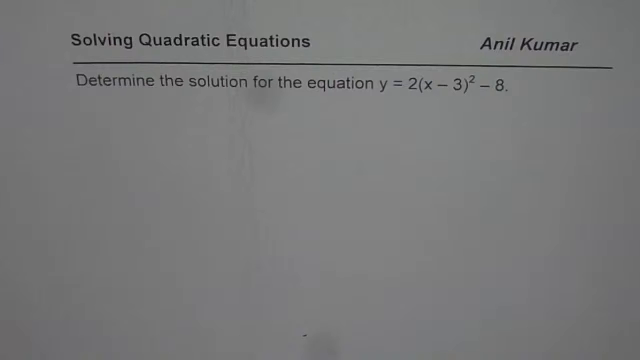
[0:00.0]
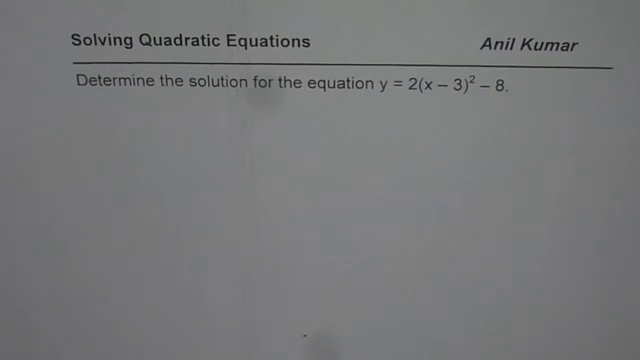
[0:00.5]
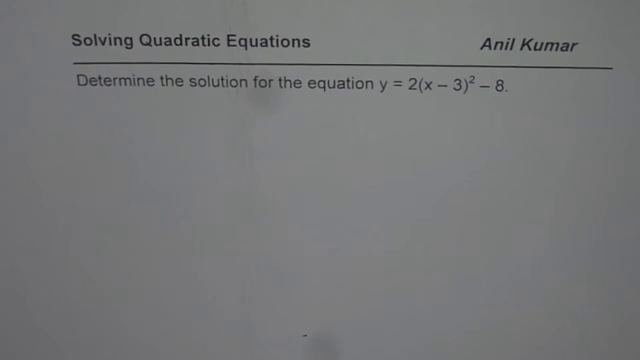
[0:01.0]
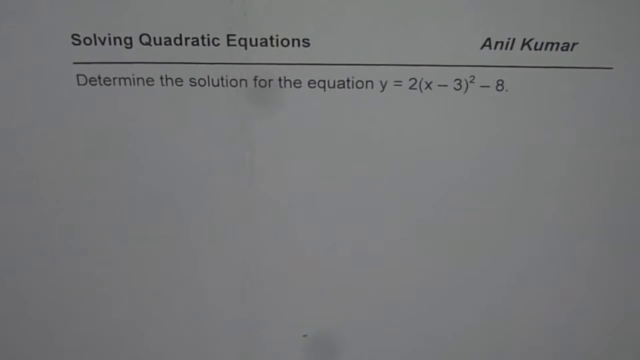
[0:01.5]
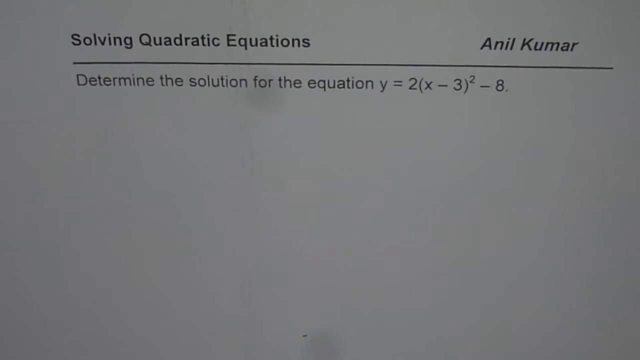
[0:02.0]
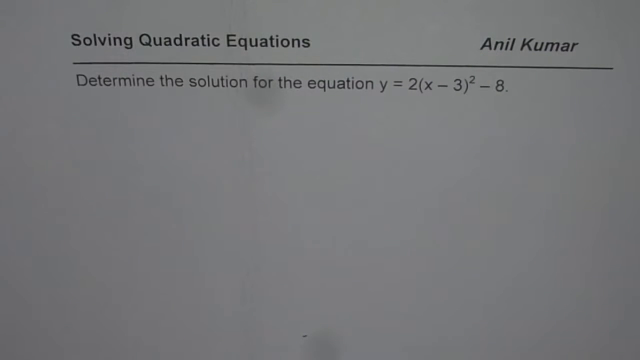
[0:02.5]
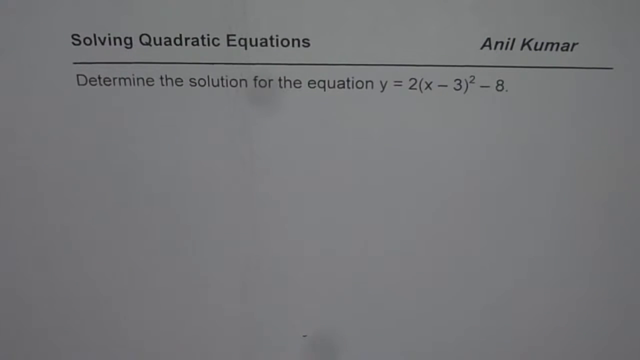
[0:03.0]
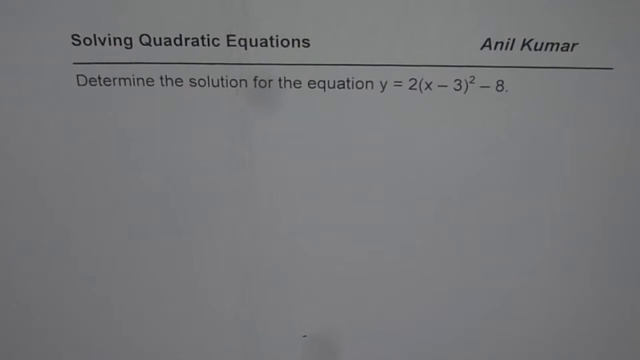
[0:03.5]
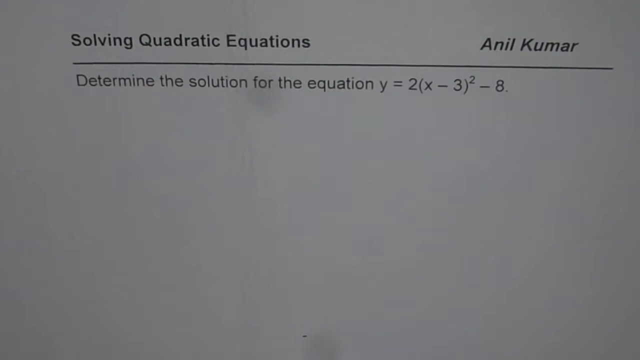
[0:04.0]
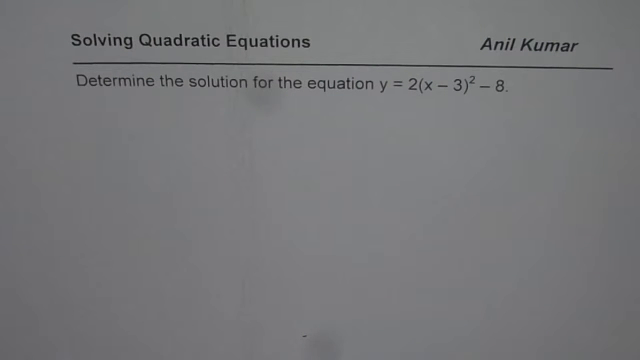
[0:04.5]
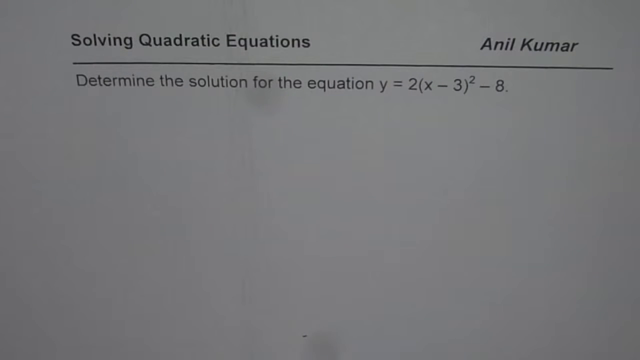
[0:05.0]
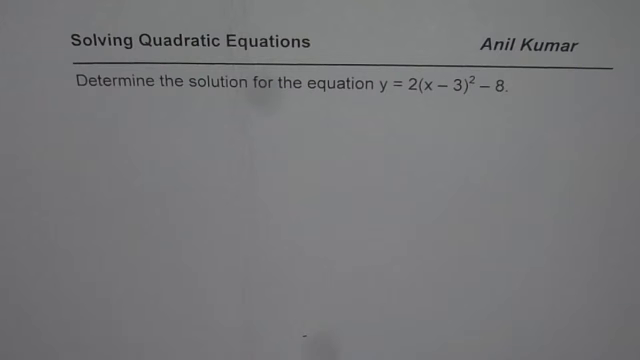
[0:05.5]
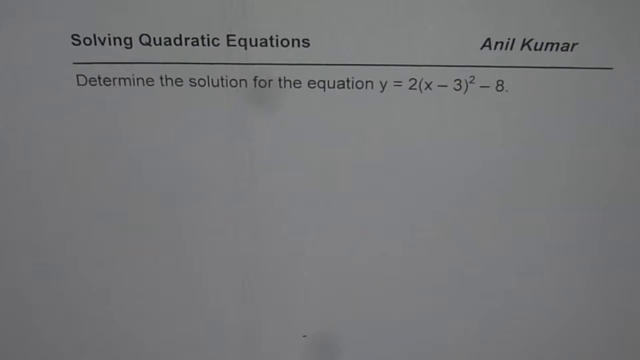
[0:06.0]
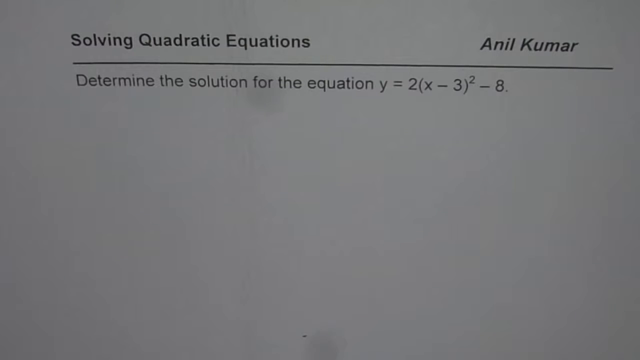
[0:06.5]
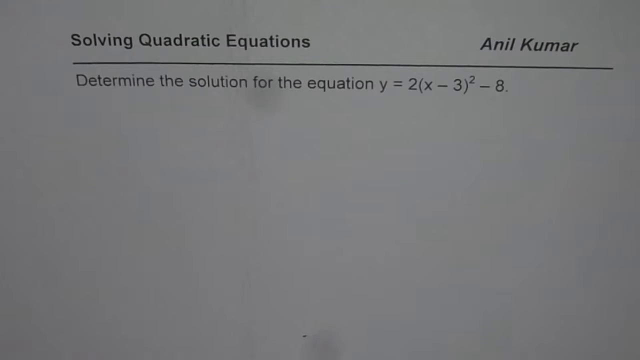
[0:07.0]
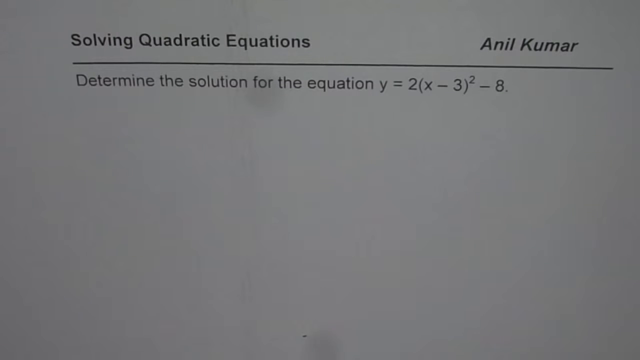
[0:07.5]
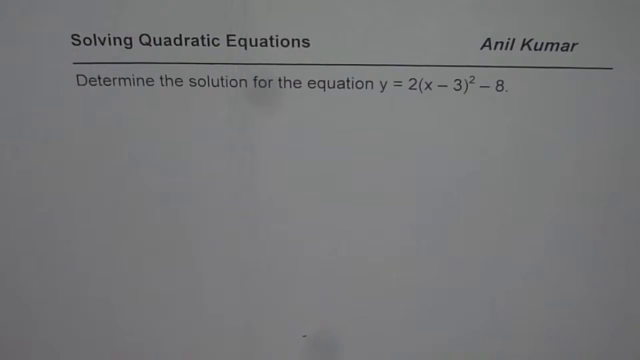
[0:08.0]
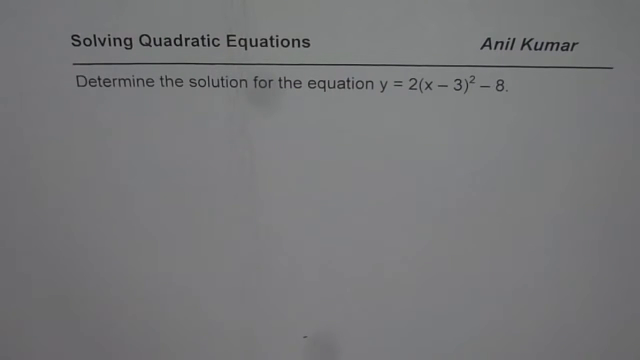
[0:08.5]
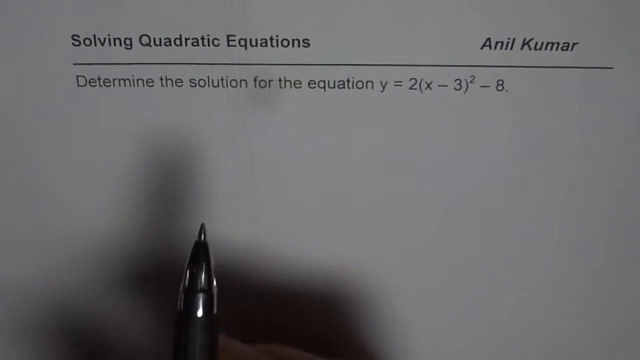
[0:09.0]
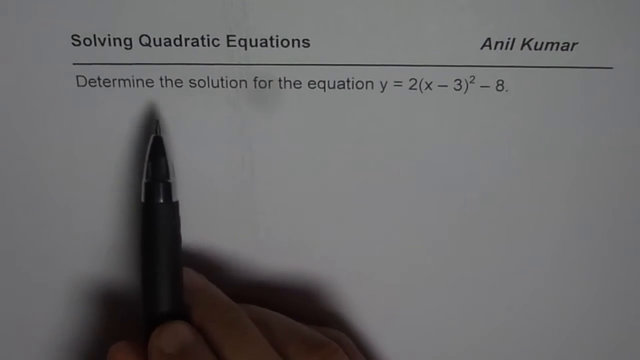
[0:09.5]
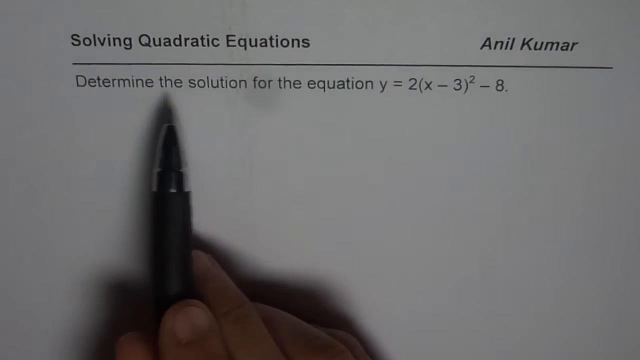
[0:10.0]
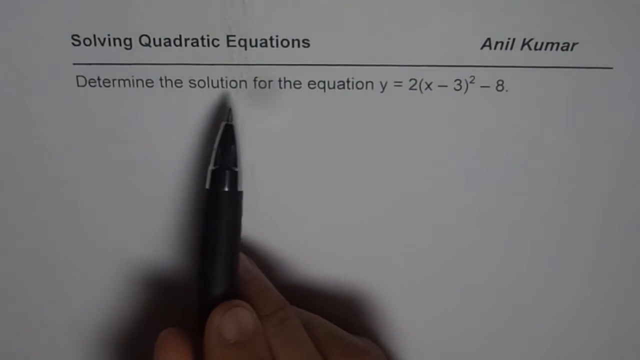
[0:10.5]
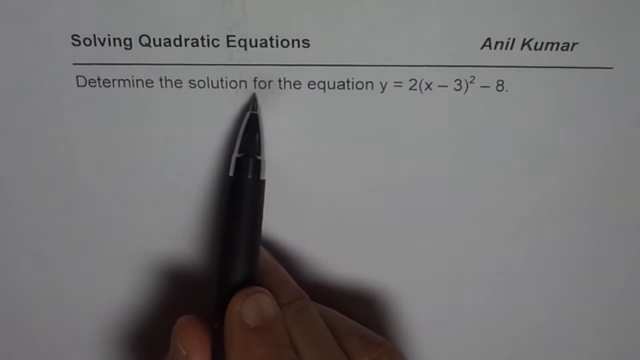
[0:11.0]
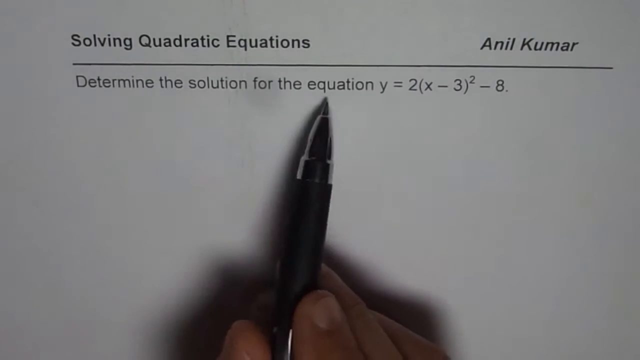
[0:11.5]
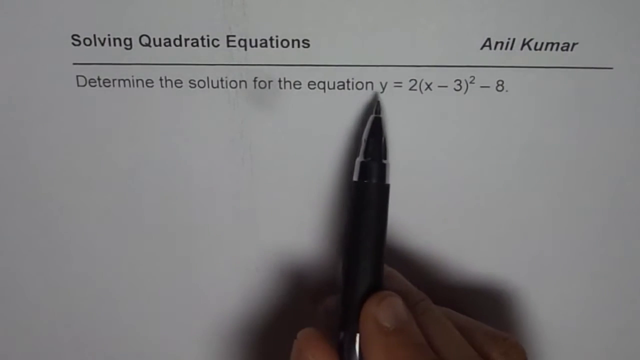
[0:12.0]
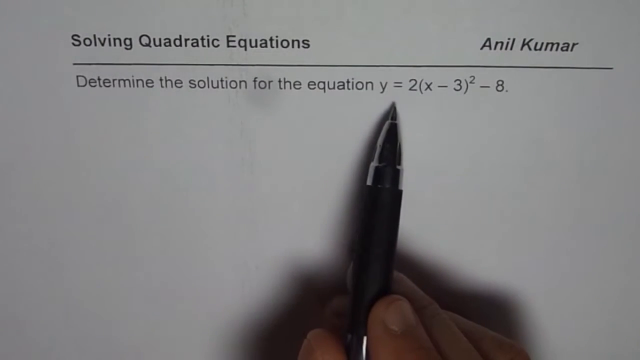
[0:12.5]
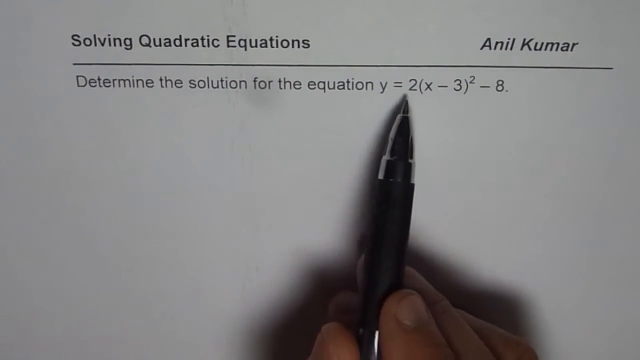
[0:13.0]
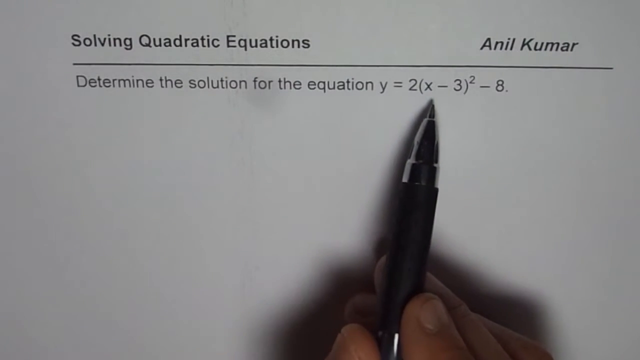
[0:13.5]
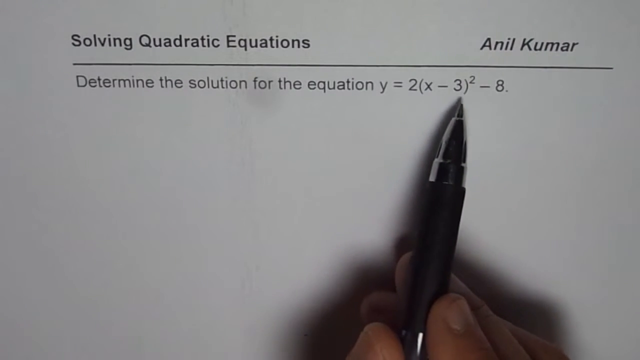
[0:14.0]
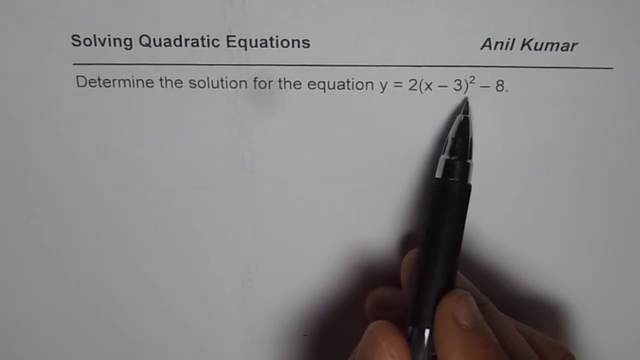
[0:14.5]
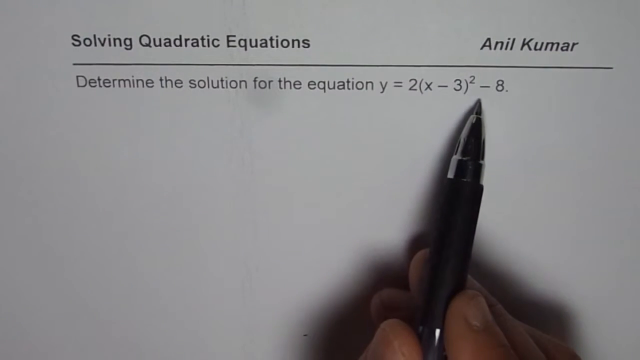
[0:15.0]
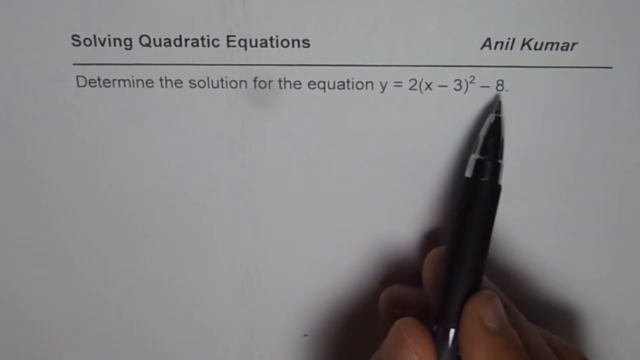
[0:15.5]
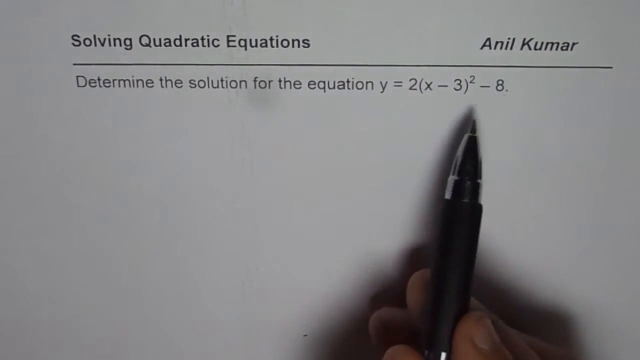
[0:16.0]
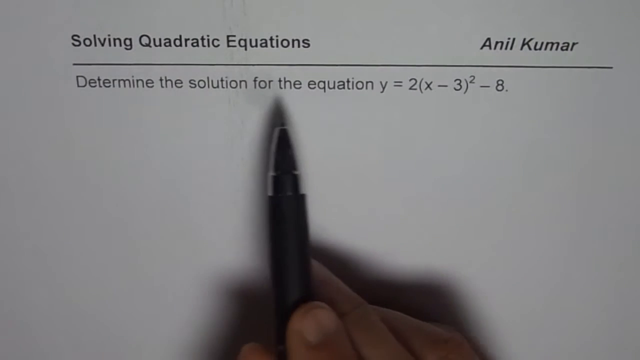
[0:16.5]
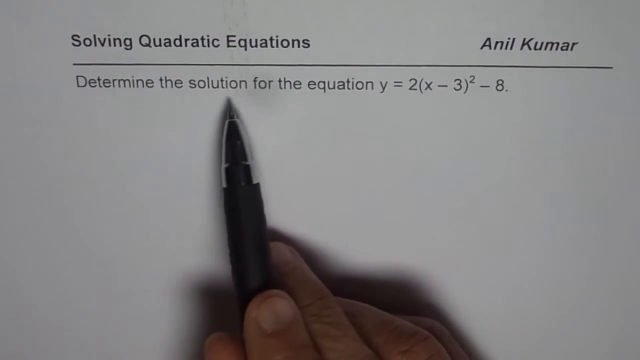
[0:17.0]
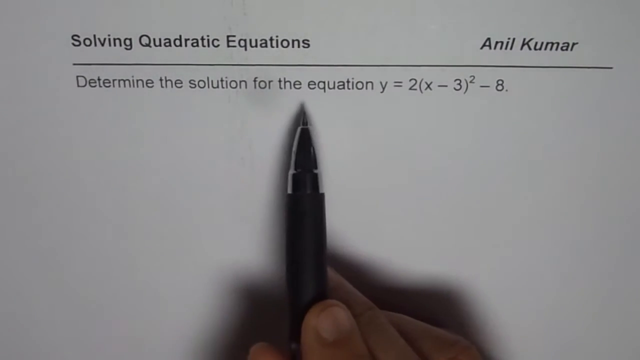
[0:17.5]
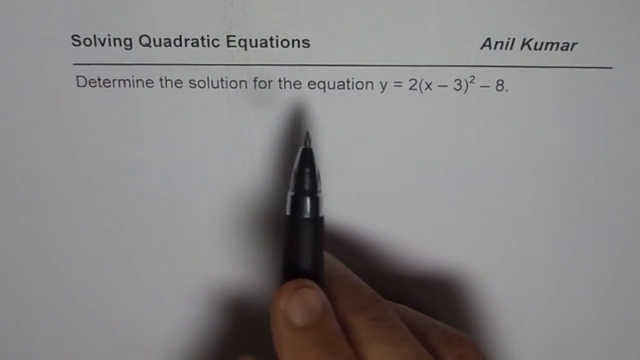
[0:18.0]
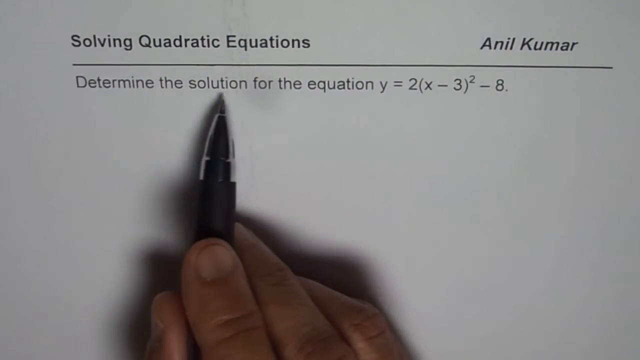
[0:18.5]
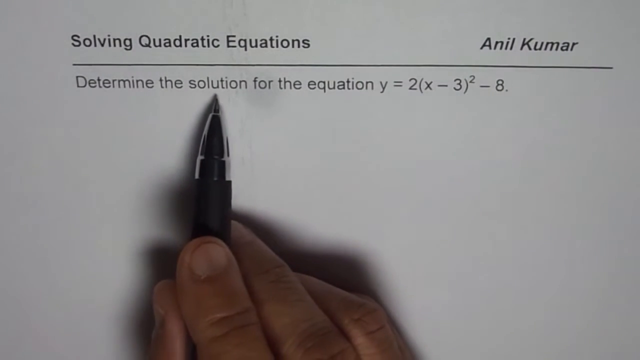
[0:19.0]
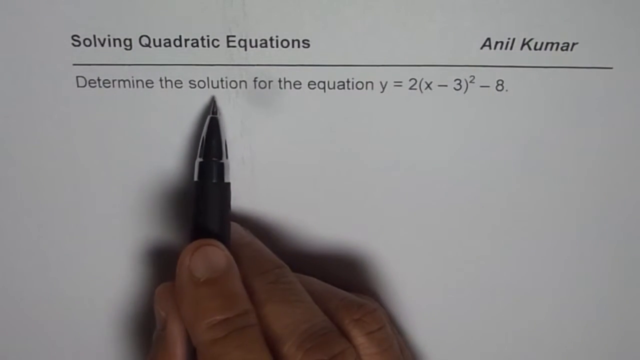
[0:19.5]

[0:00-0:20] A sheet of paper is headed "solving quadratic equations" with the name Anil Kapoor and the problem to determine the solution for the equation "y = 2(x − 3)² − 8". A hand holding a black pen is over the blank white paper, apparently about to solve the equation. There seems to be shade on the paper, two lines of it, like sunlight; because of the shade the white paper looks gray.